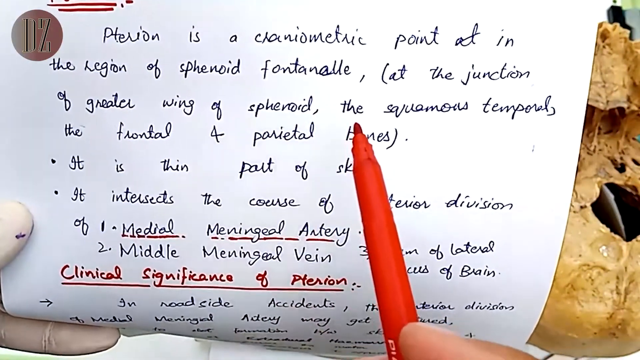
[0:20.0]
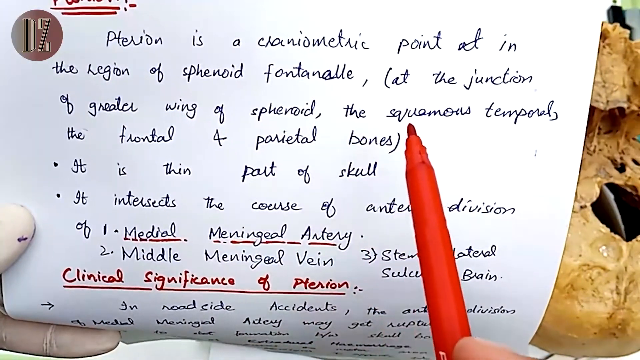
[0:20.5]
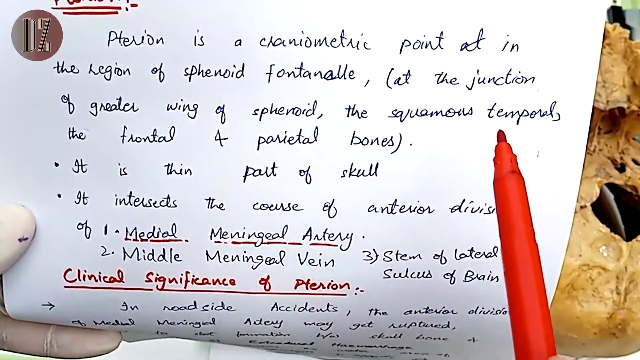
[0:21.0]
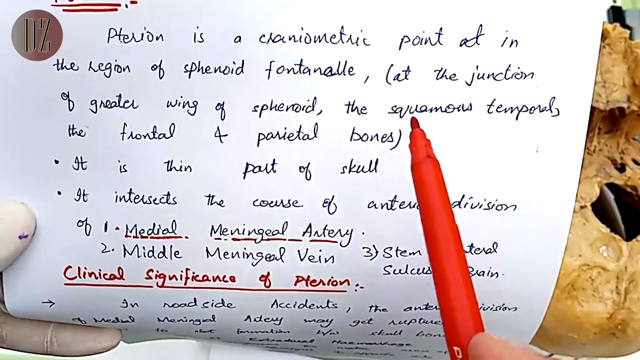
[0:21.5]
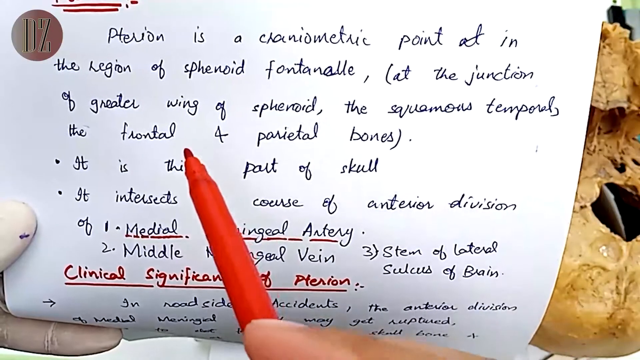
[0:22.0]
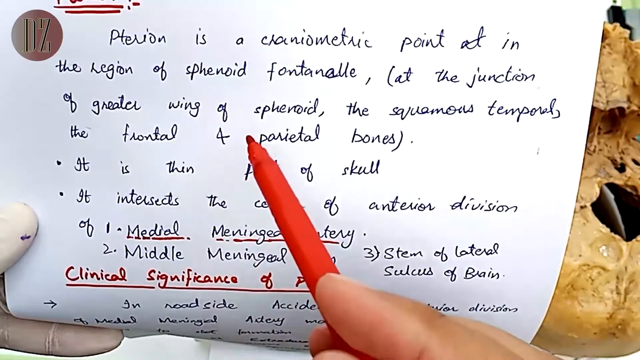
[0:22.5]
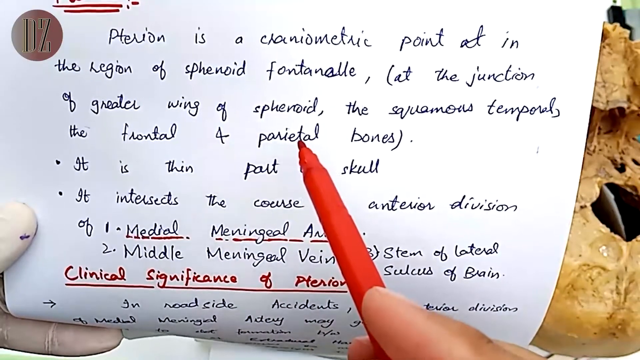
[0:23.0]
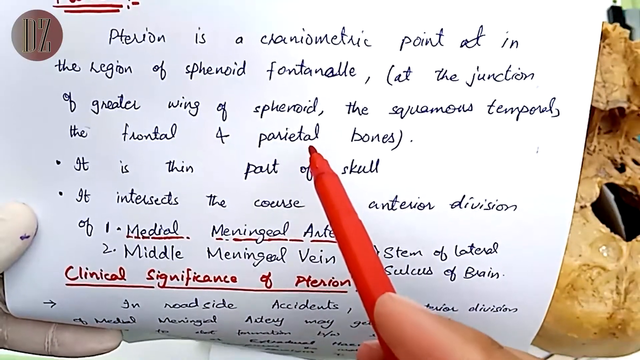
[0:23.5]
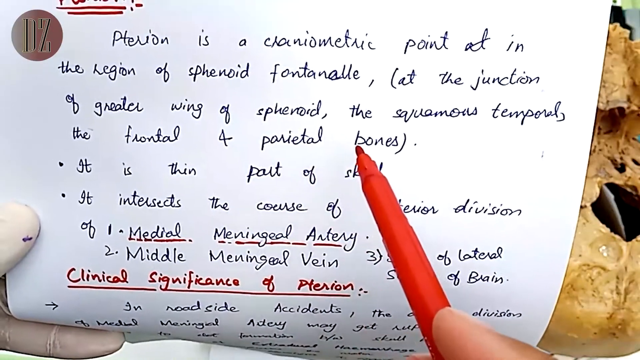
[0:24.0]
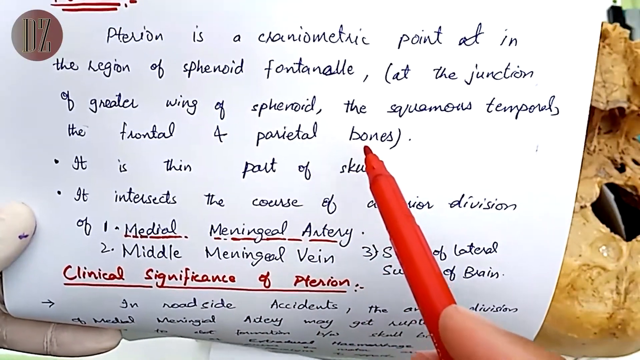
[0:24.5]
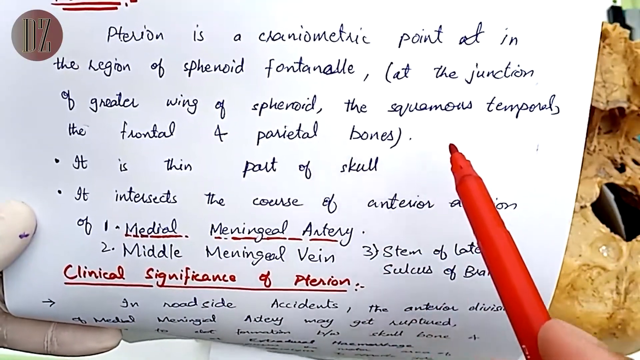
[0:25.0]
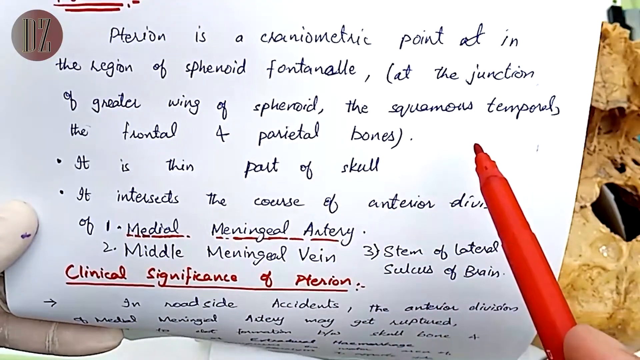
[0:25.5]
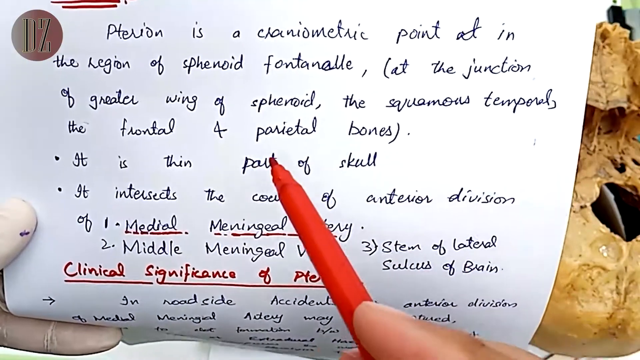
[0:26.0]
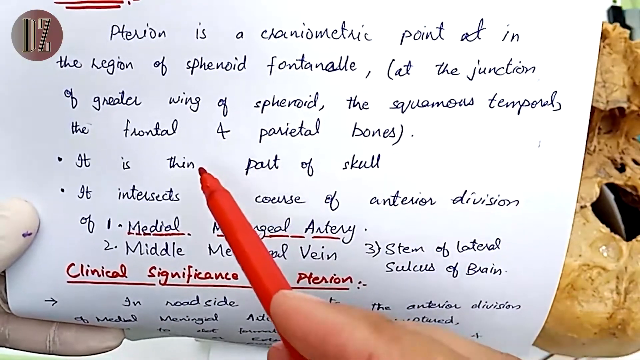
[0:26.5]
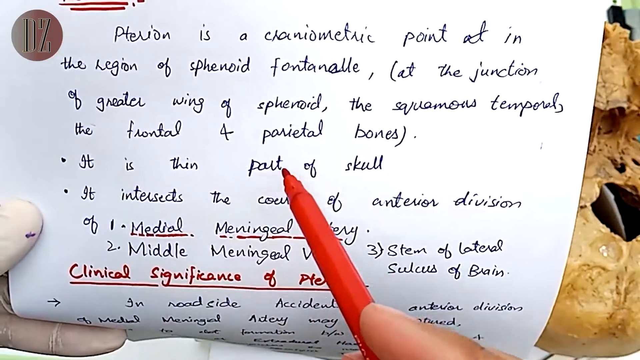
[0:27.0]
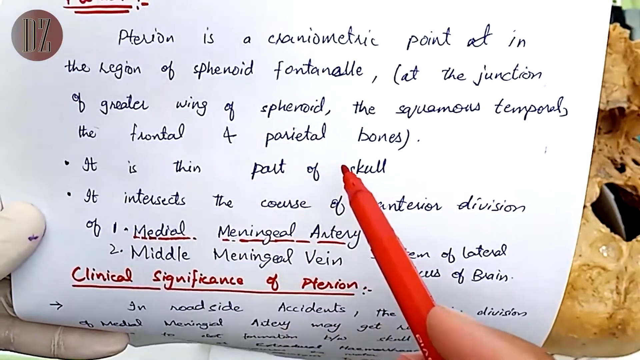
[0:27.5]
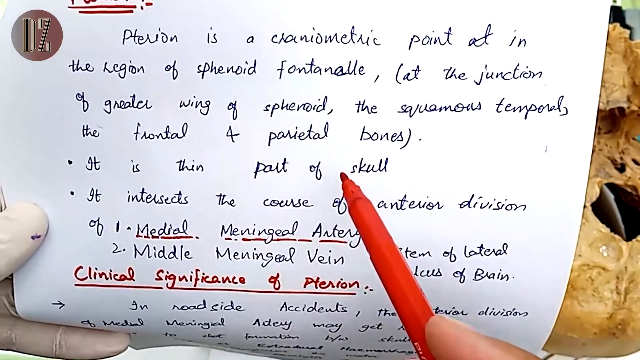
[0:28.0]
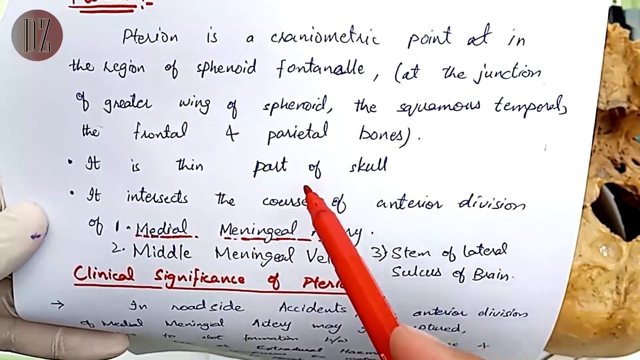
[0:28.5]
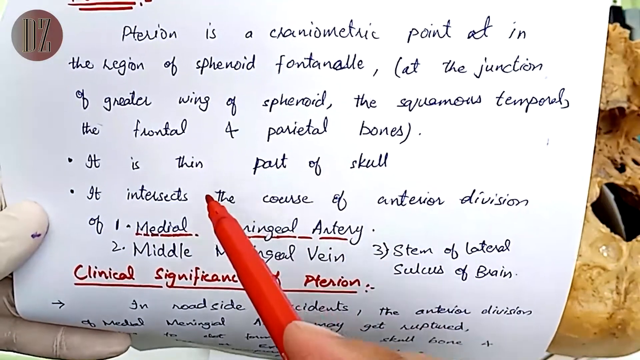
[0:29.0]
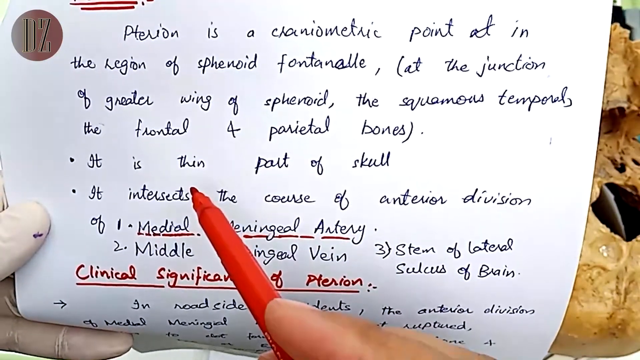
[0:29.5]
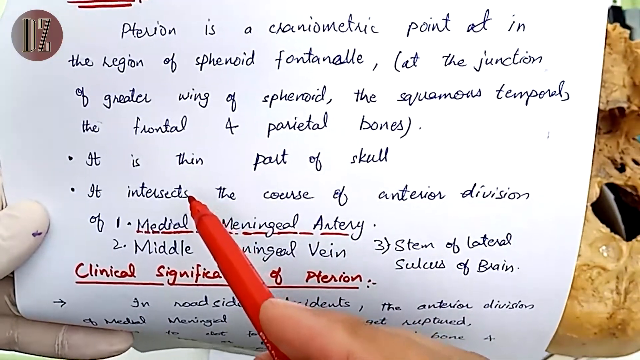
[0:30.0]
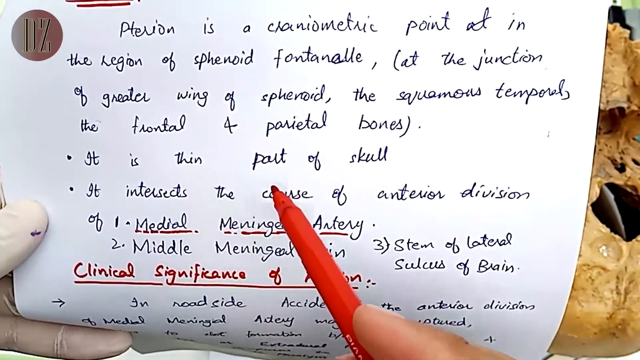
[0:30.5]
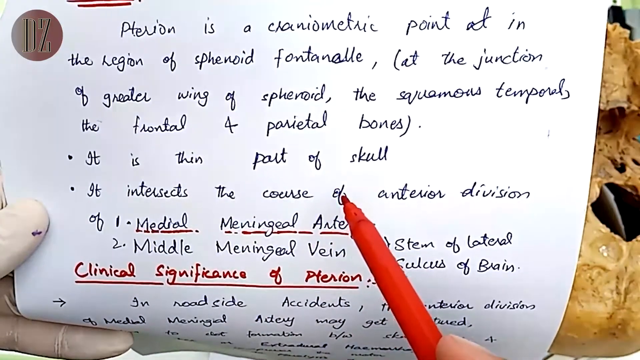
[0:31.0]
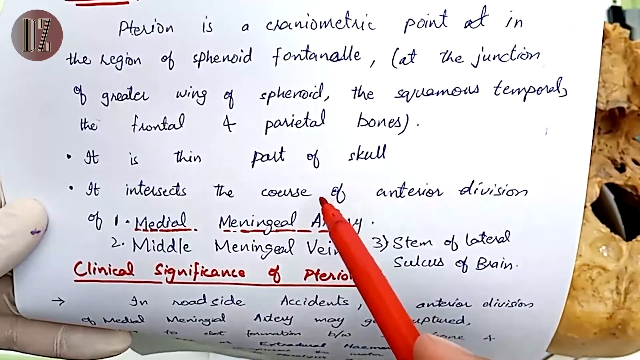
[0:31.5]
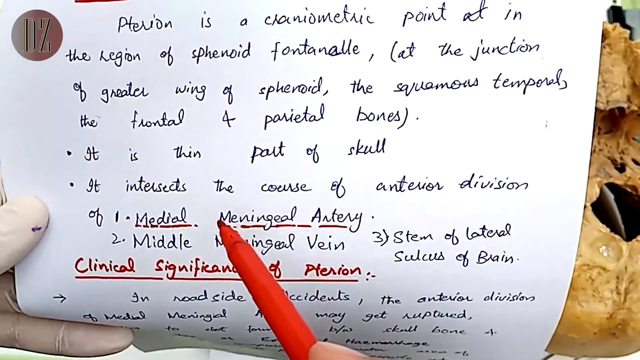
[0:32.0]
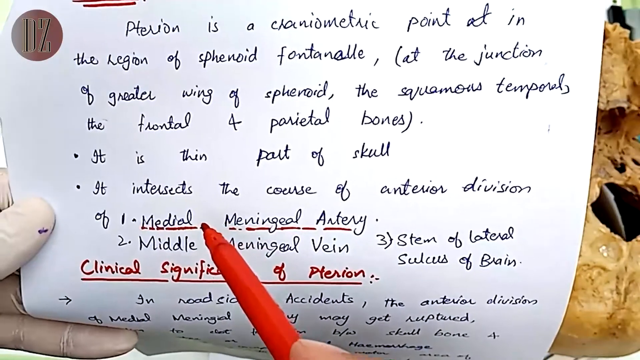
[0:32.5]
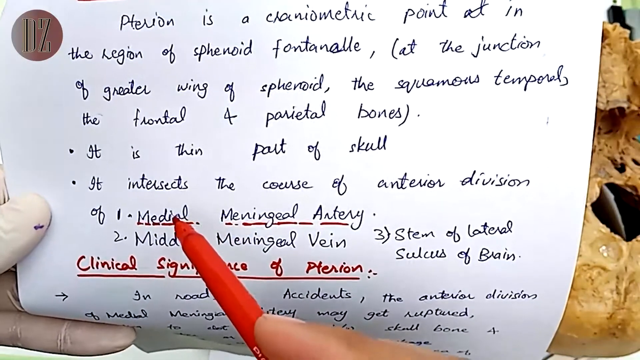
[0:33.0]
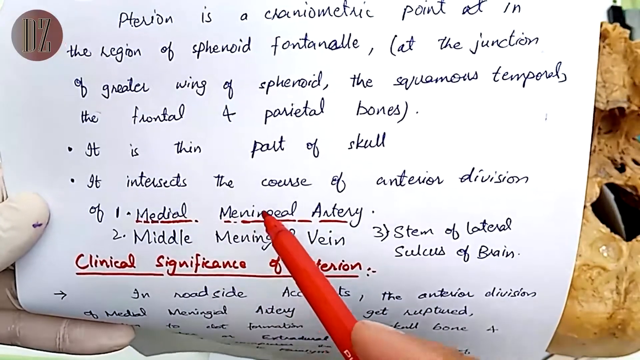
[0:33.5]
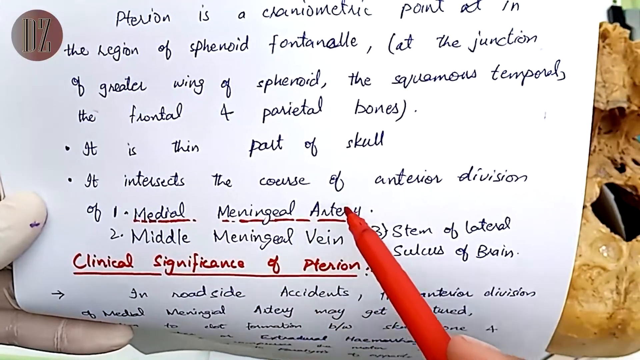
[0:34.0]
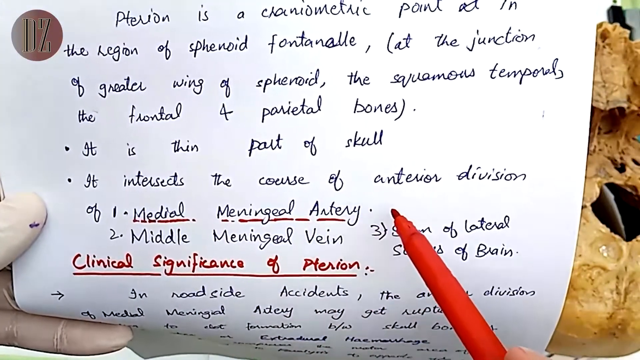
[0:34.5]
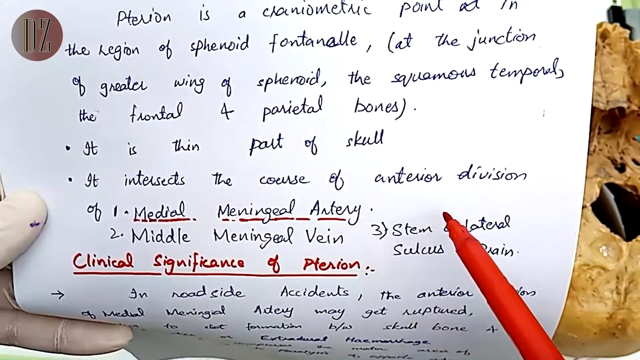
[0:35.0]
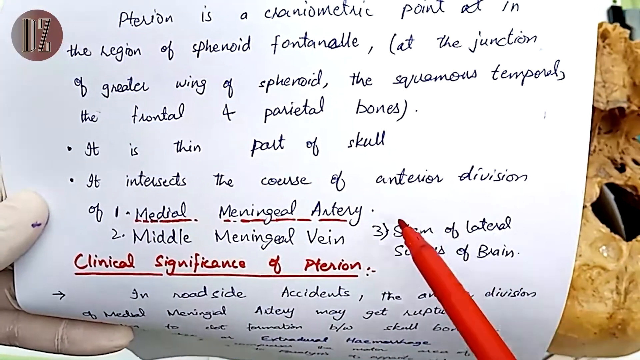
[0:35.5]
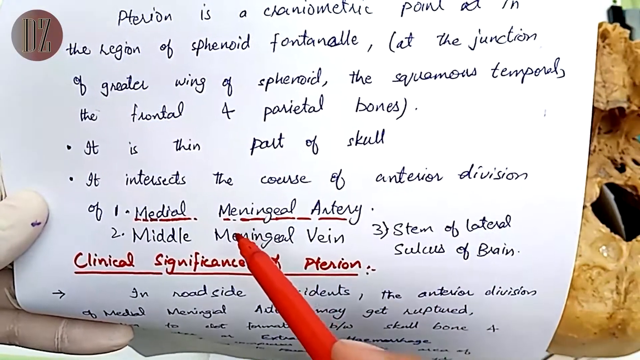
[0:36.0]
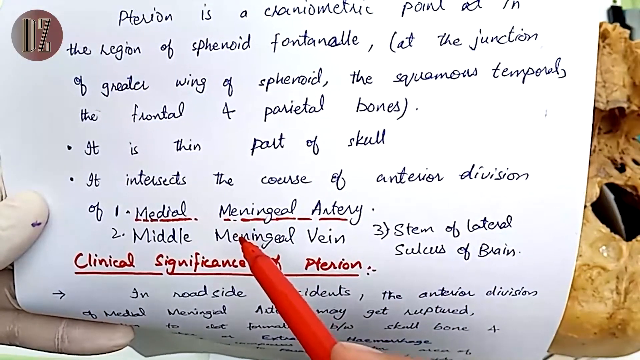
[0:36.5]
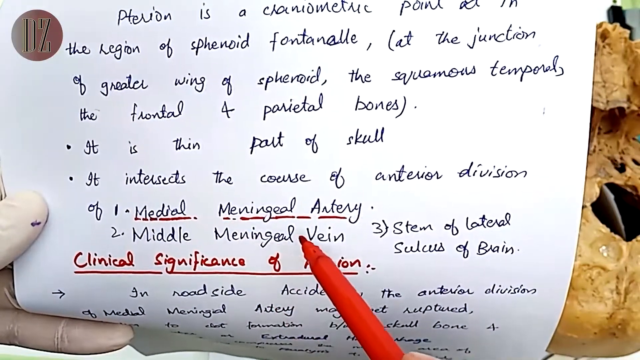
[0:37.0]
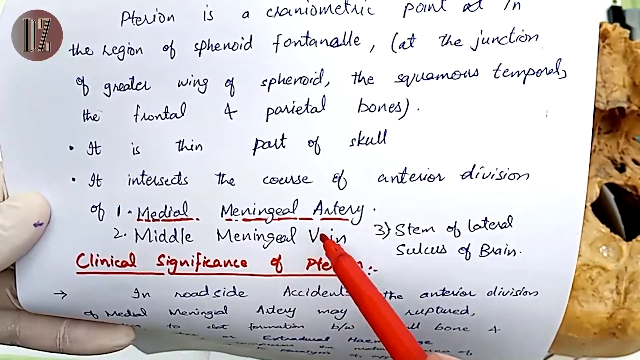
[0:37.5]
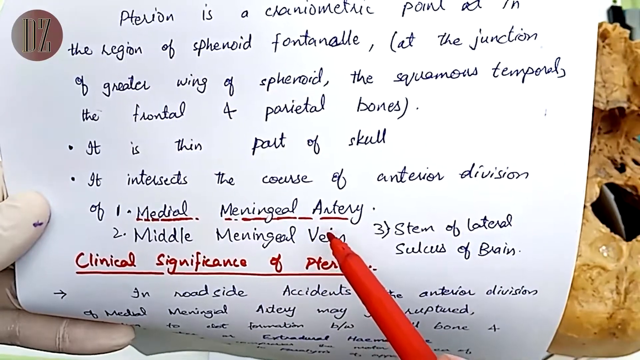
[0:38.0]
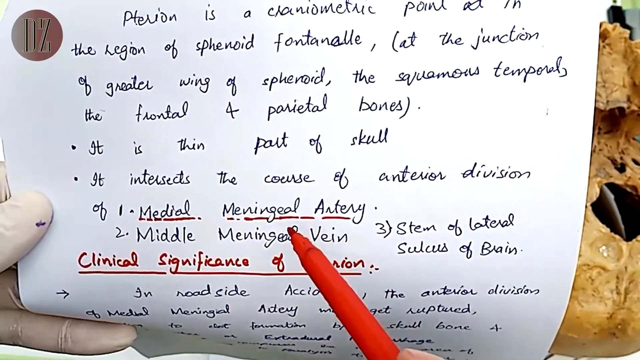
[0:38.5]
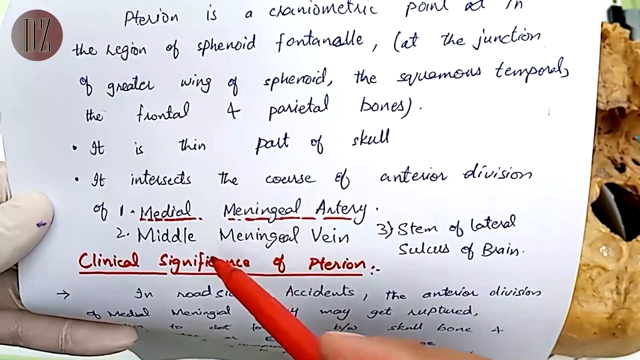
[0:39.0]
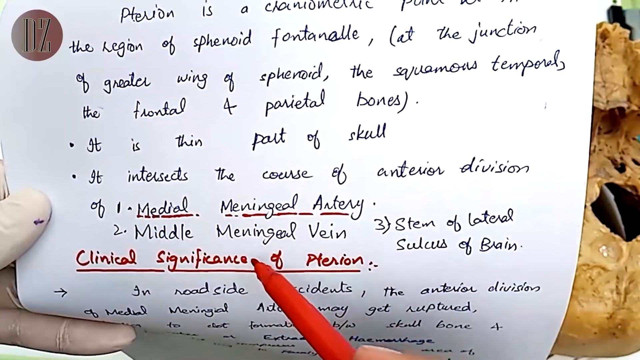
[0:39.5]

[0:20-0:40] A close-up shows a piece of white paper with no lines, bearing small writing in black ink in cursive and printing, along with bullet points. Someone holds the paper between their left thumb and left fingers. There are red marker markings at the top left of the page. The words "medial meningeal artery" are underlined, and "clinical significance of Pterion" is written in red marker and underlined as well. Someone holds the red marker, though their hand cannot be seen, and moves it slowly from left to right under specific words as if reading them, possibly out loud. In the upper left-hand corner is a round logo with two letters, apparently a capital D and Z; it looks like a copper coin or a seal.